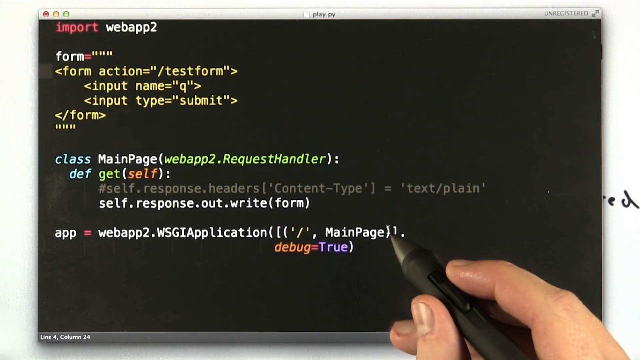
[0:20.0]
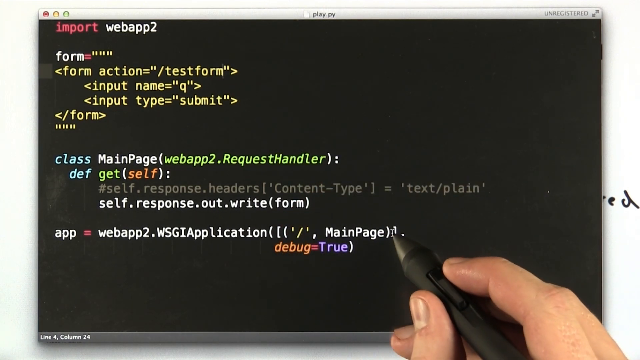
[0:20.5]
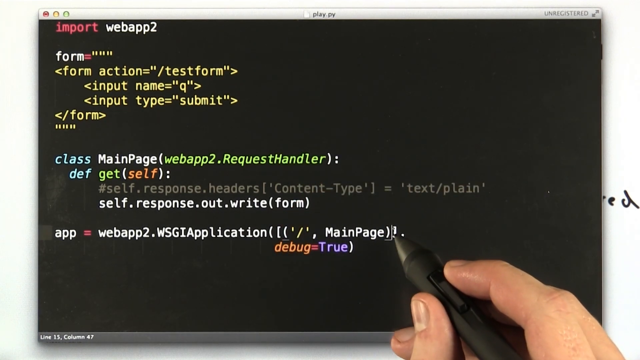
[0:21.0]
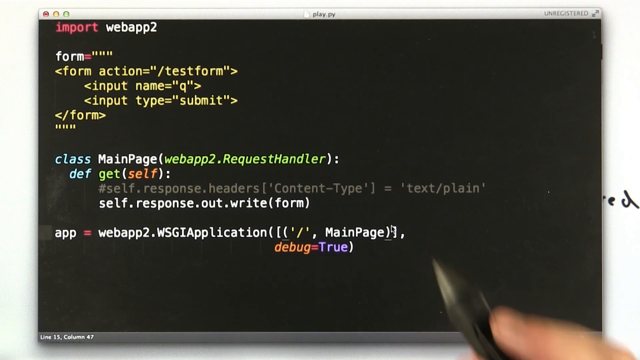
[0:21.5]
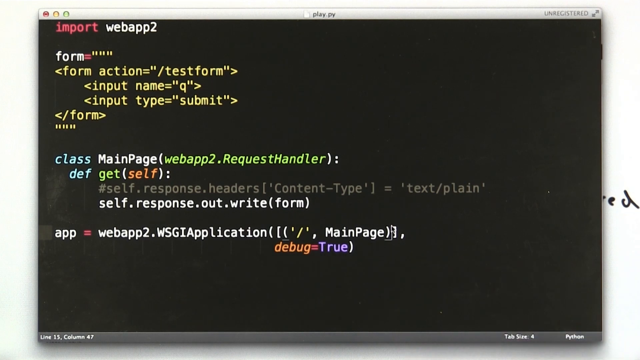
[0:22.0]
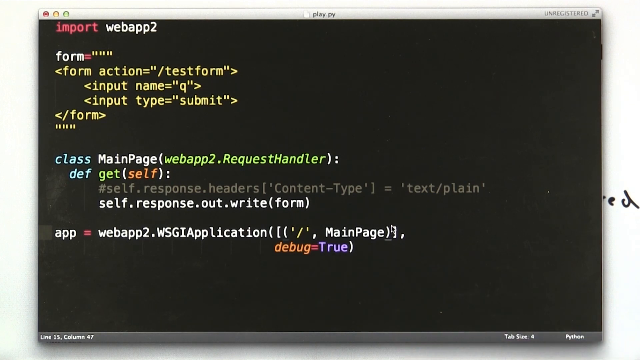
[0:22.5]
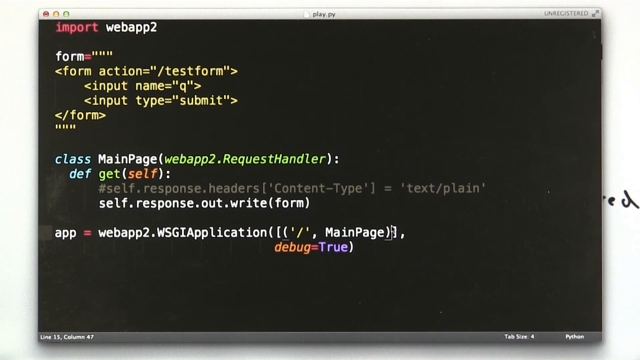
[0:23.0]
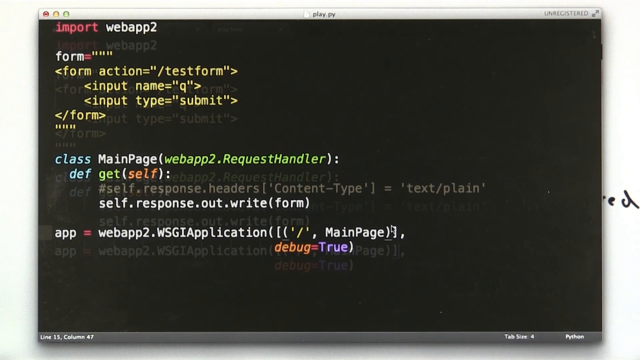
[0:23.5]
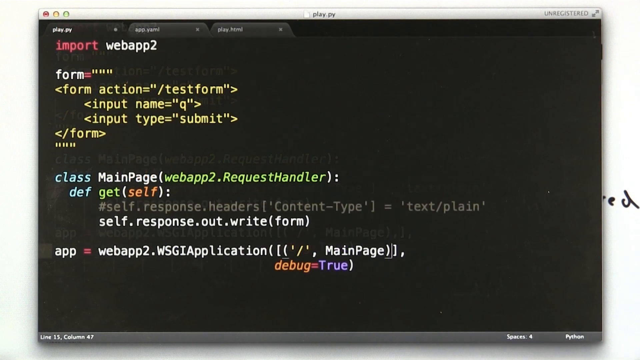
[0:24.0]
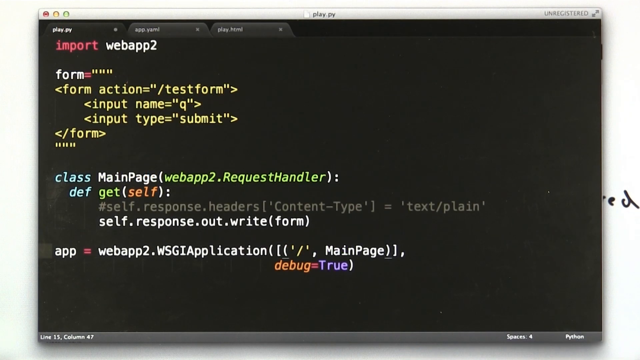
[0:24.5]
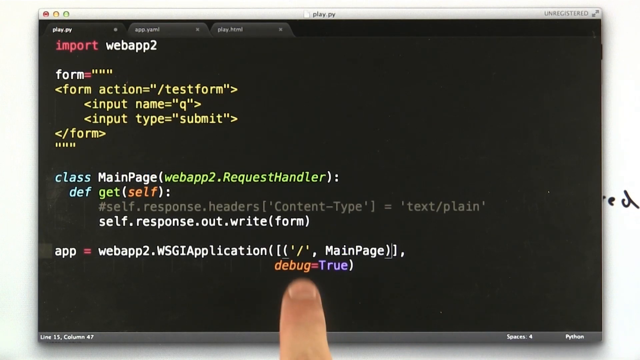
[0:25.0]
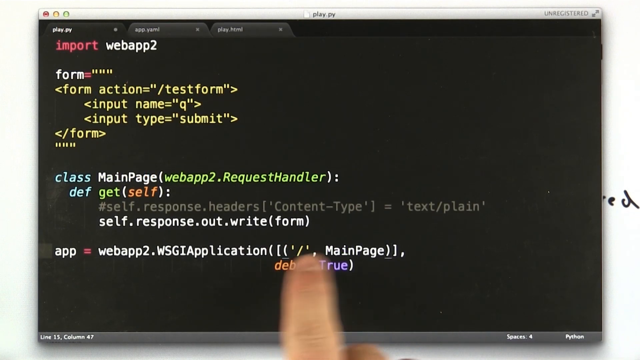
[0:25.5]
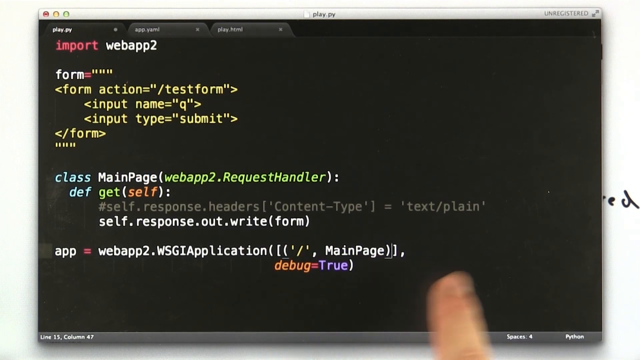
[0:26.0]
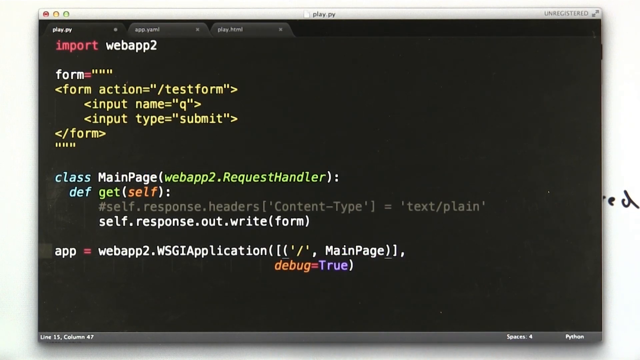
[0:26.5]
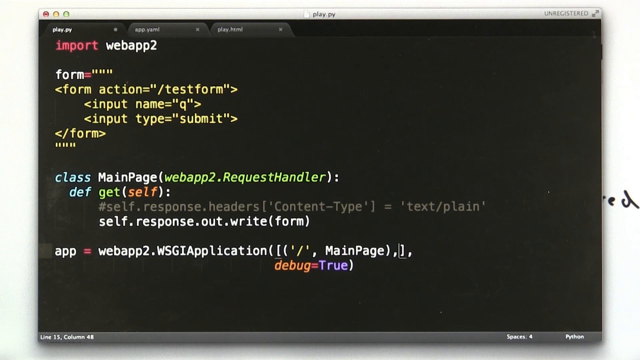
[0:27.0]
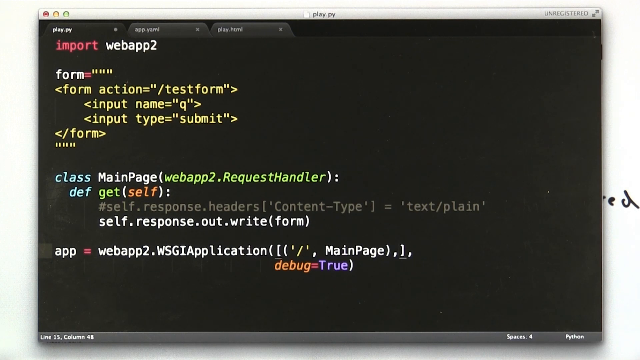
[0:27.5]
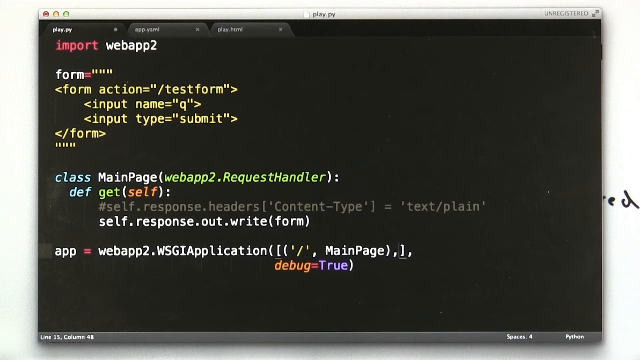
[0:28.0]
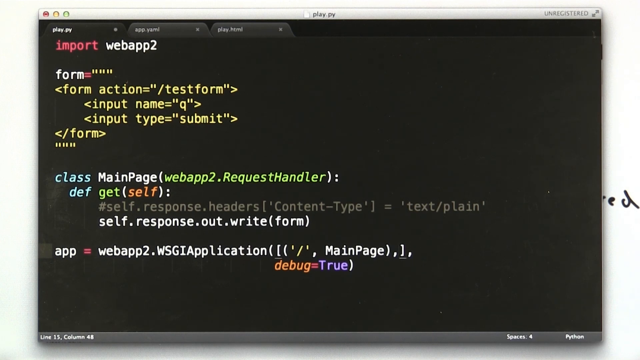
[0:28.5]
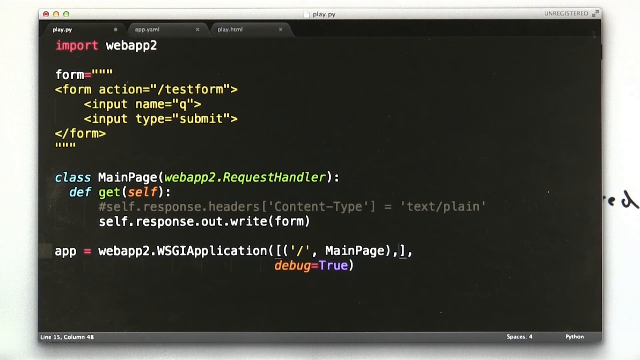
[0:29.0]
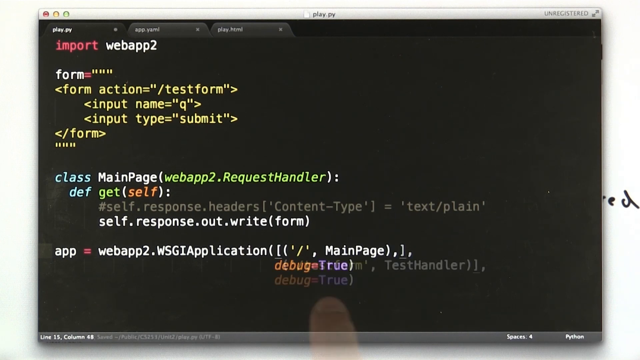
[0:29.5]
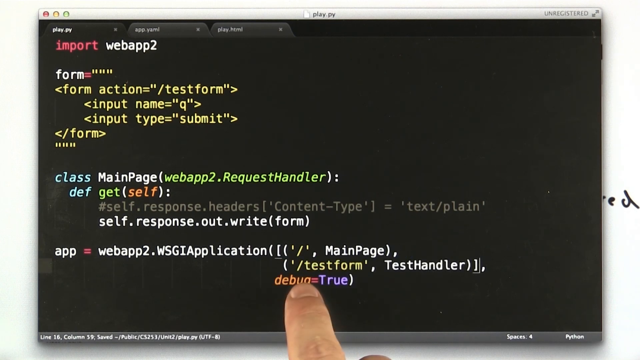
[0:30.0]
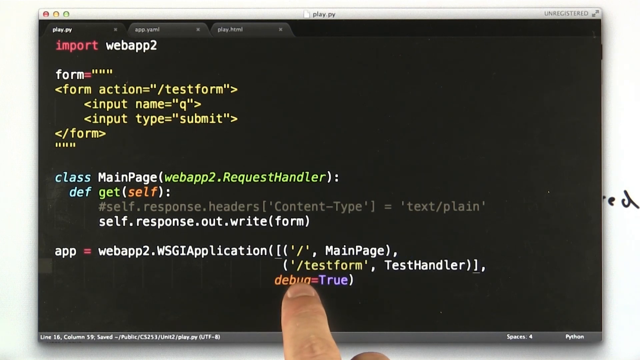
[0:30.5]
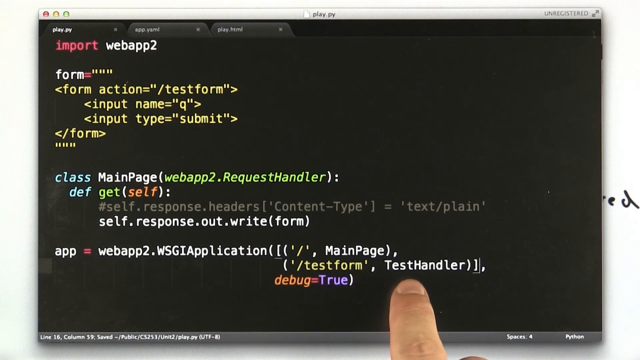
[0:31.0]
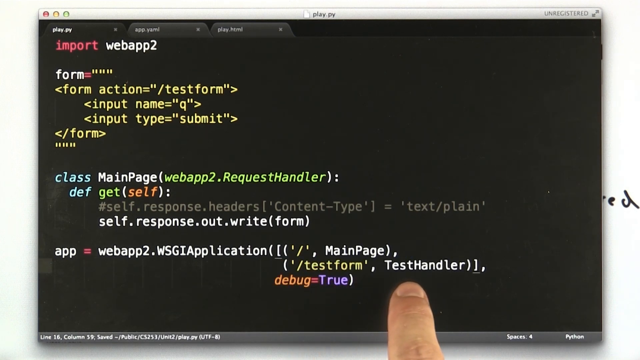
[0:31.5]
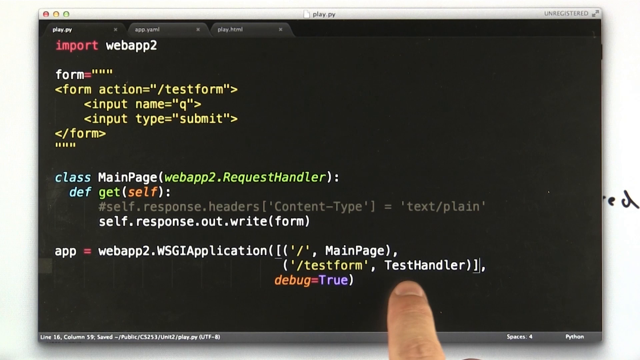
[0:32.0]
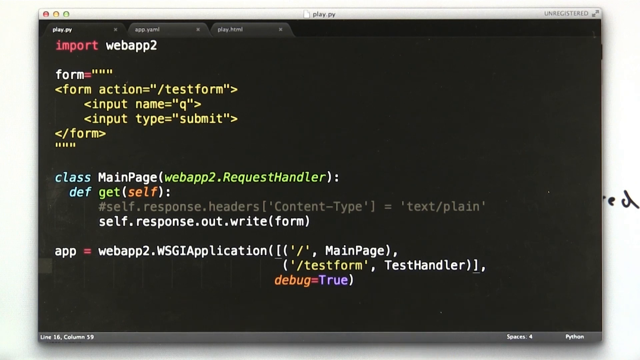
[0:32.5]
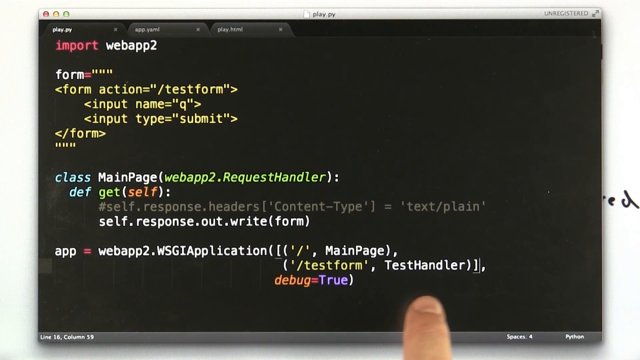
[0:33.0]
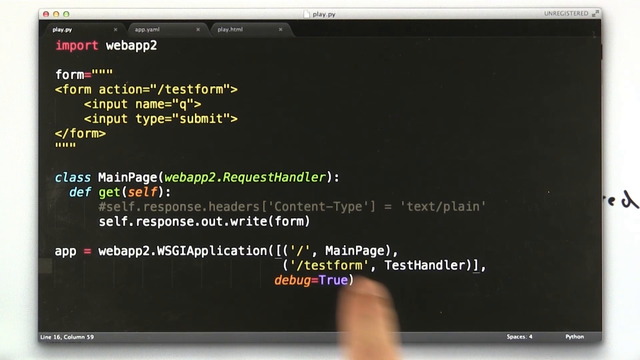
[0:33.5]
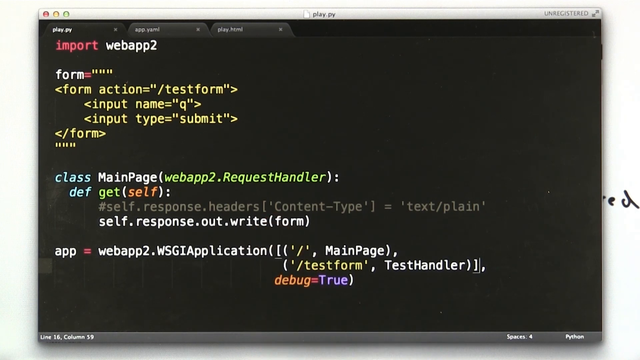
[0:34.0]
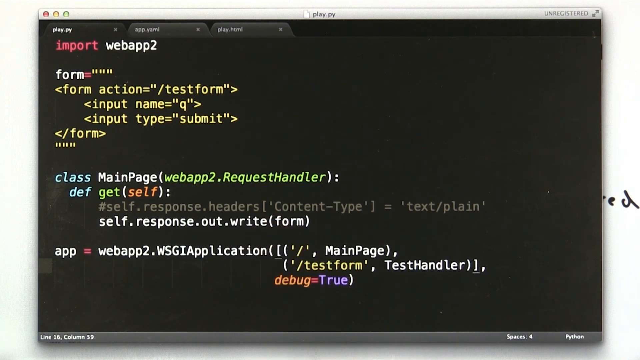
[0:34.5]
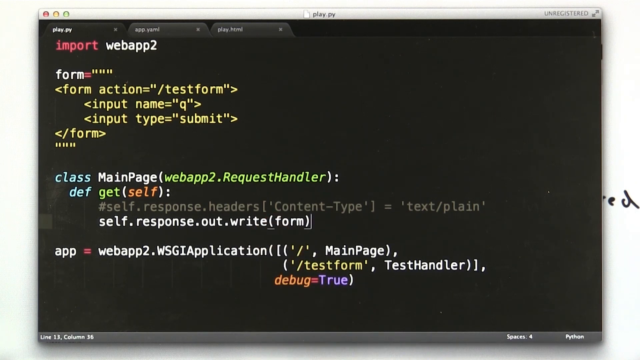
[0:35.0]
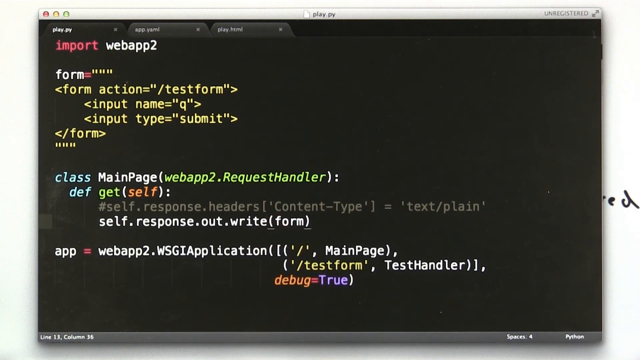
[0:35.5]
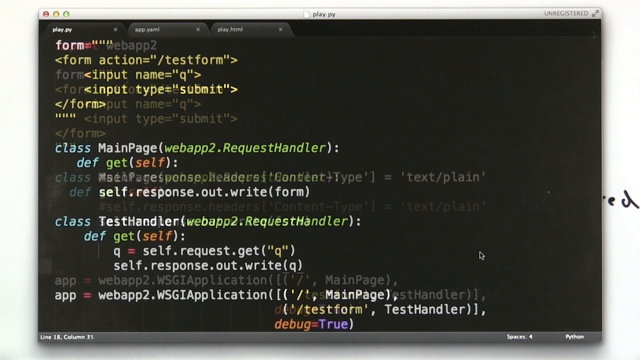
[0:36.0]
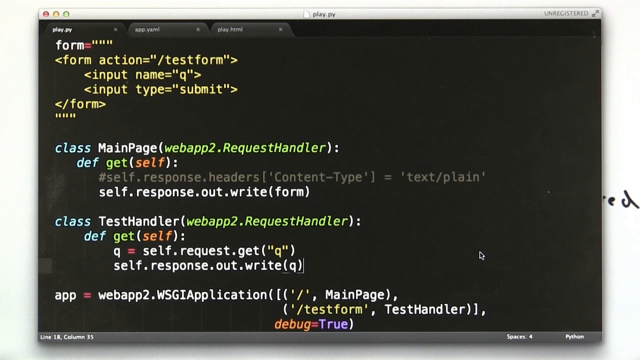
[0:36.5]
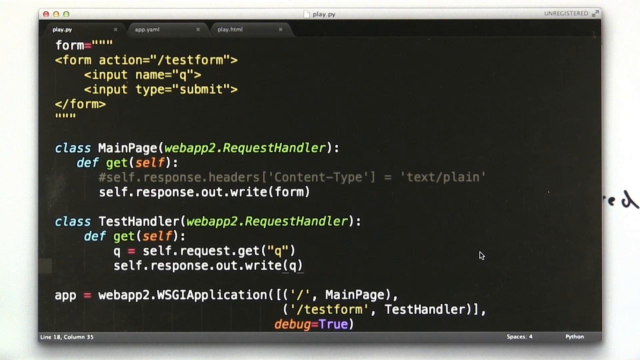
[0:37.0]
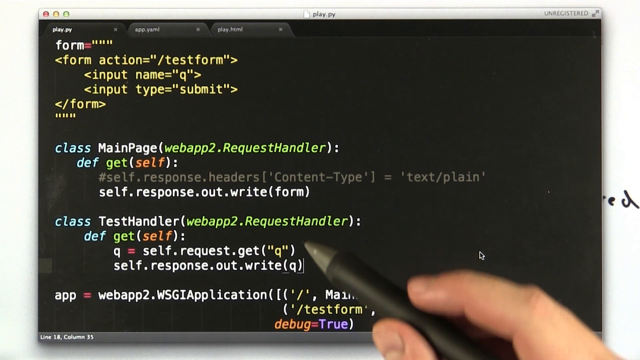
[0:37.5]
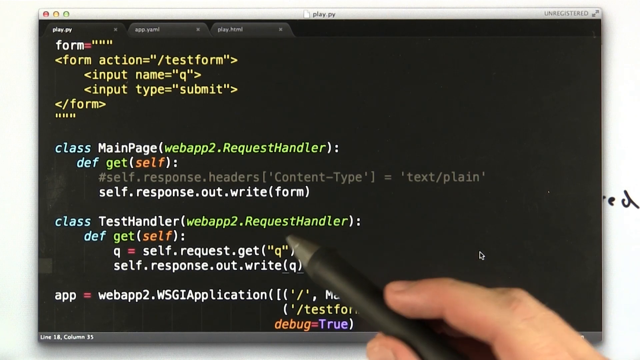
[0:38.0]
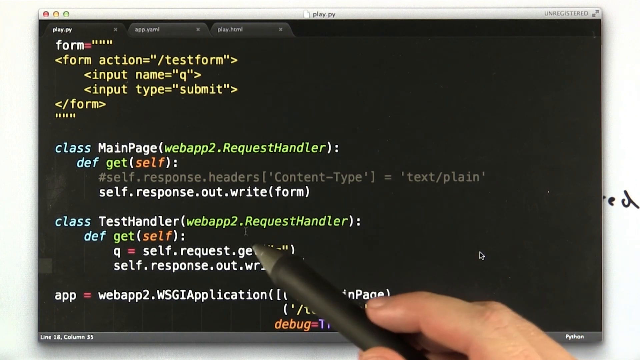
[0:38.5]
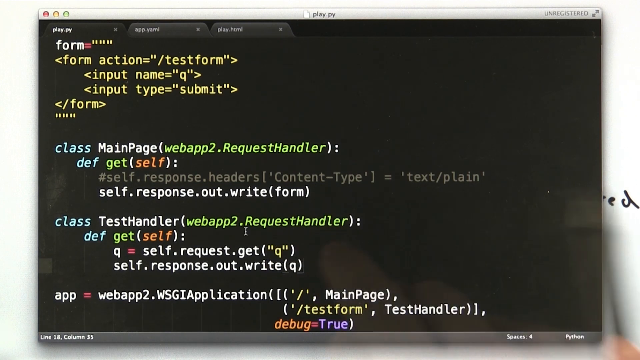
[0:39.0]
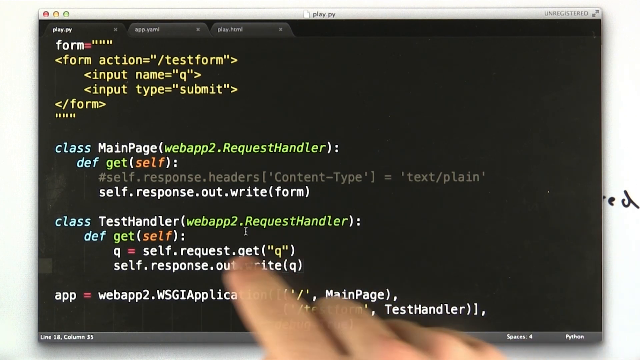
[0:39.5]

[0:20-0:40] The page is dedicated to creating a new software app. A hand holds a stylus, and fingers point at various points on the page as more text is entered. Items such as "/test form" and "test handler" are added, and the developer keeps pointing at new items as the code grows longer. The video cuts in and out as more text is added. "app = webapp2.wsgiapplication" is added and debugging happens. The developer keeps adding parts to the program and scrolls up and down to show different parts of the code. Behind the program is a white background where the very tips of some writing can be seen, and in the corner the software is marked as unregistered.